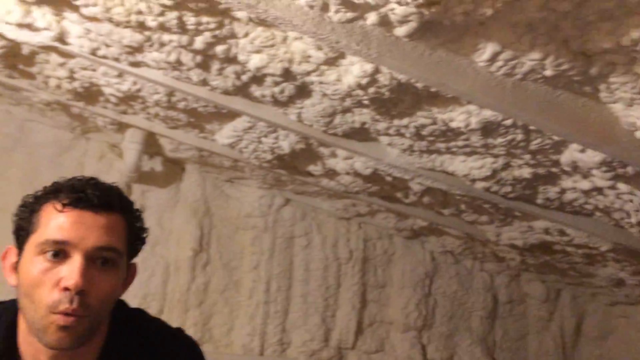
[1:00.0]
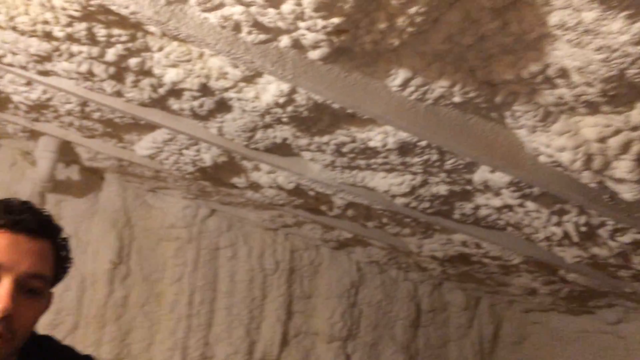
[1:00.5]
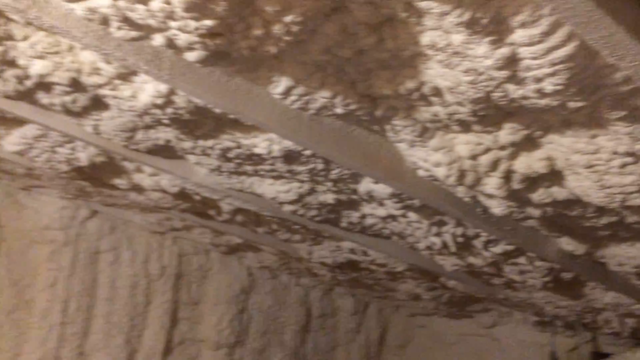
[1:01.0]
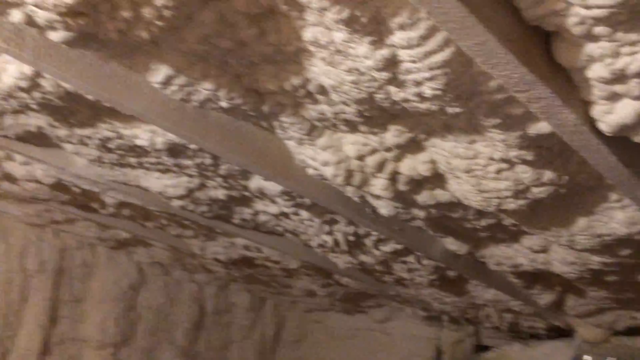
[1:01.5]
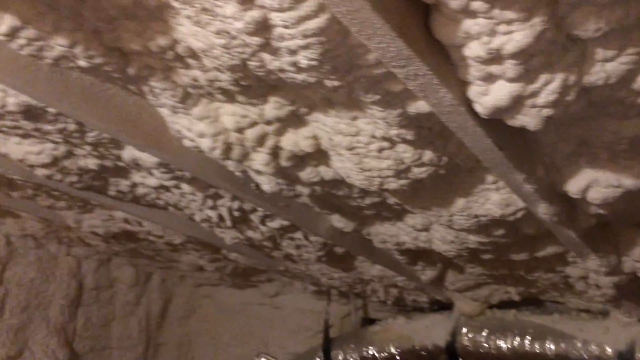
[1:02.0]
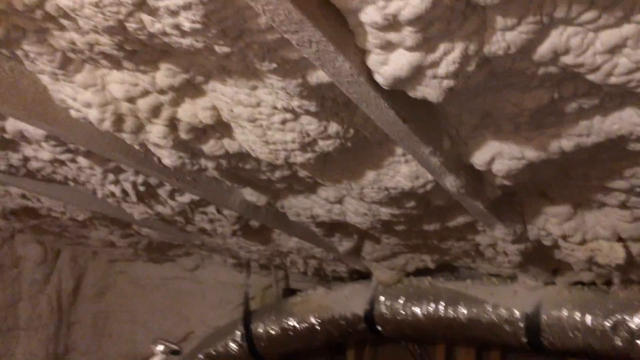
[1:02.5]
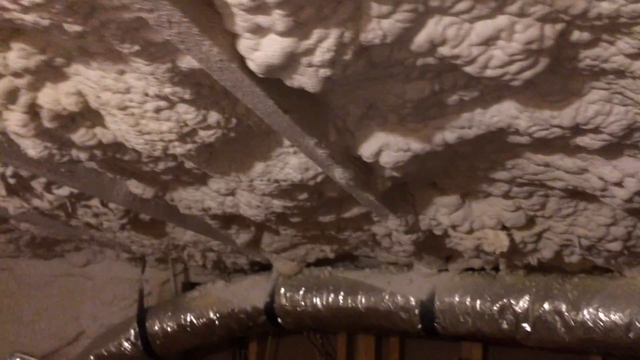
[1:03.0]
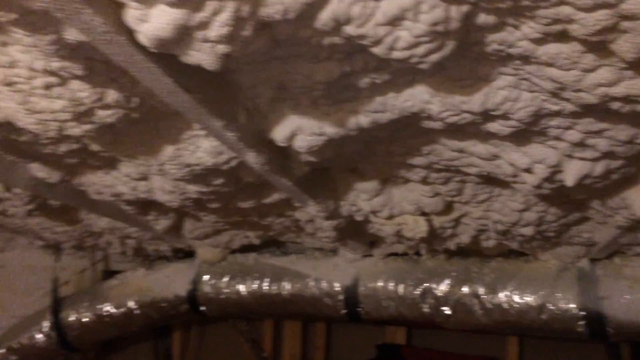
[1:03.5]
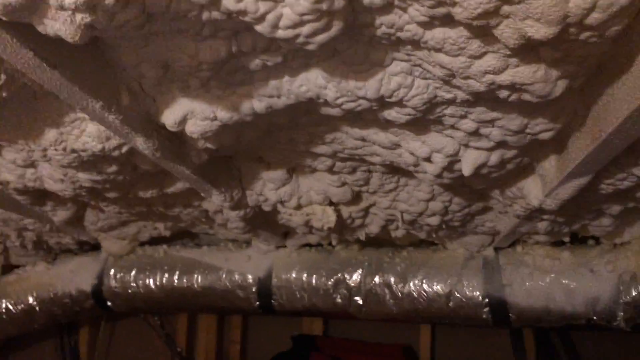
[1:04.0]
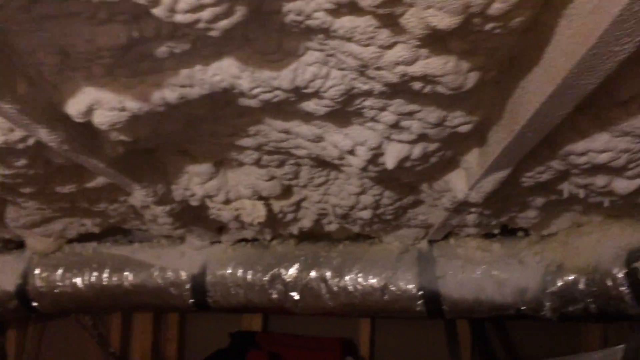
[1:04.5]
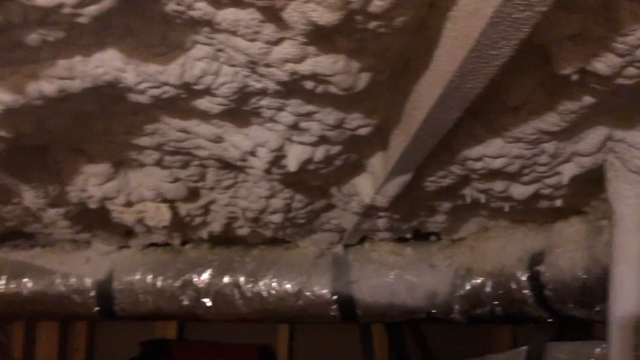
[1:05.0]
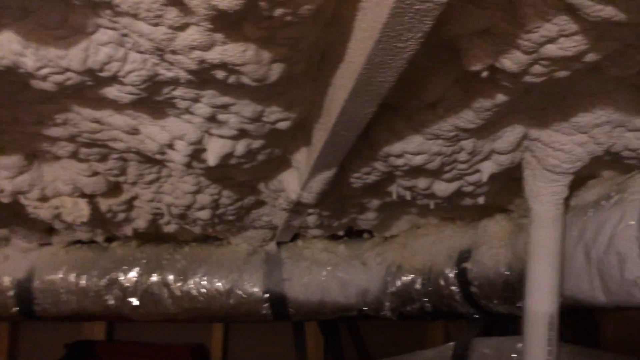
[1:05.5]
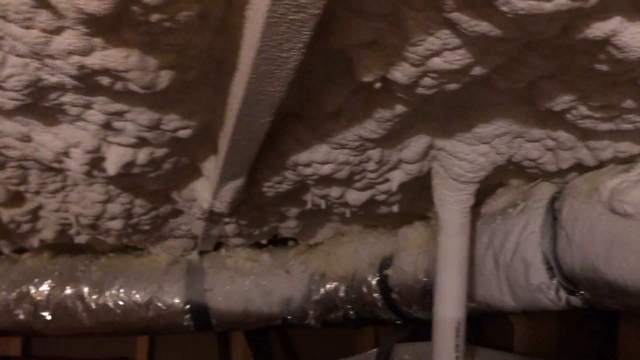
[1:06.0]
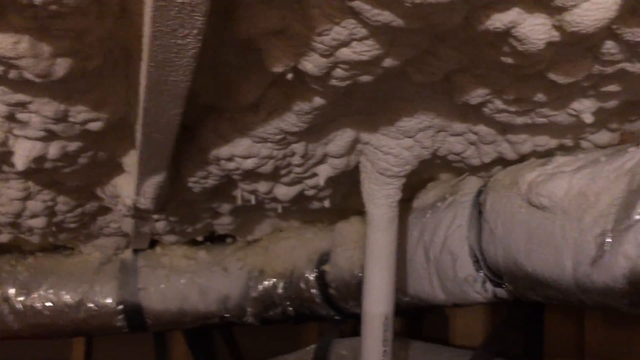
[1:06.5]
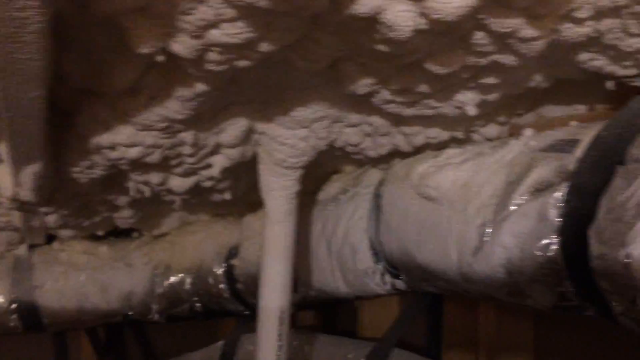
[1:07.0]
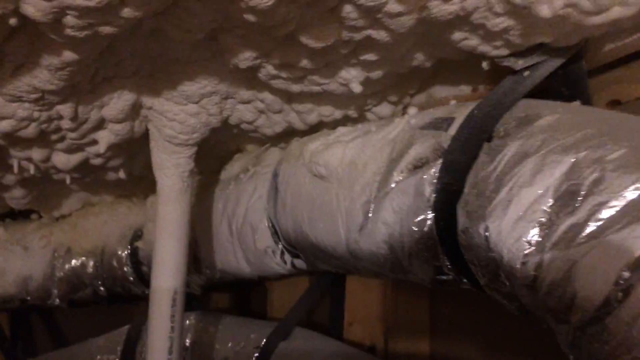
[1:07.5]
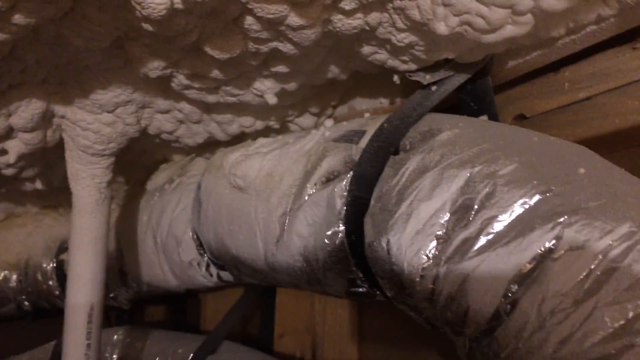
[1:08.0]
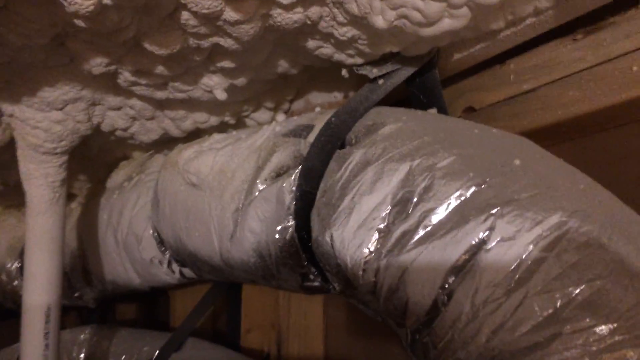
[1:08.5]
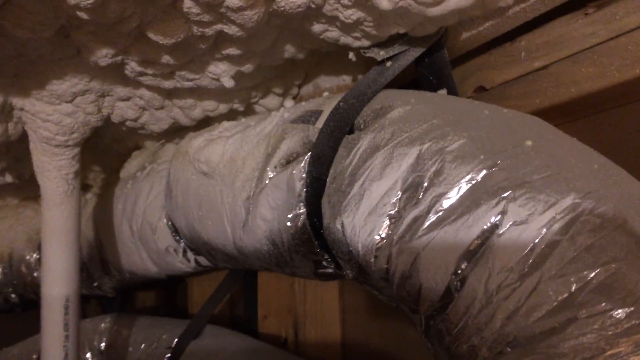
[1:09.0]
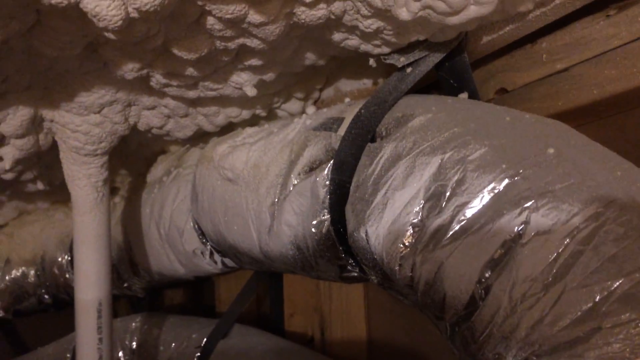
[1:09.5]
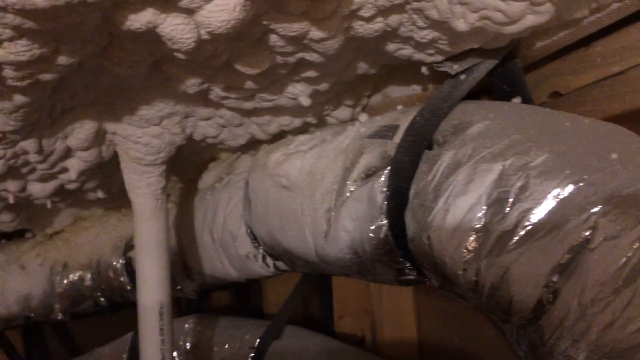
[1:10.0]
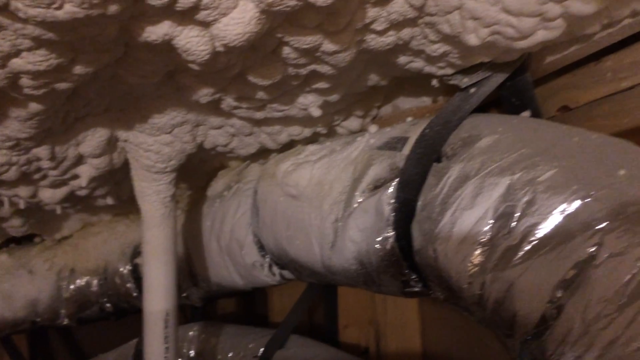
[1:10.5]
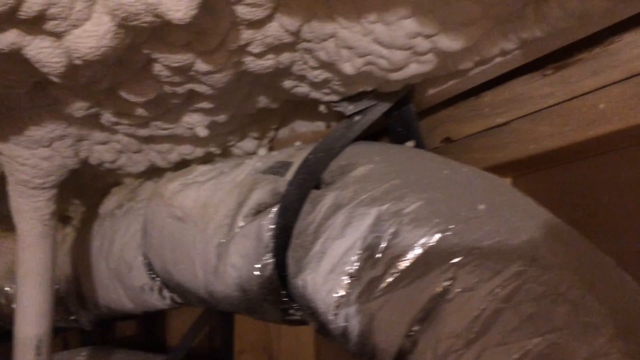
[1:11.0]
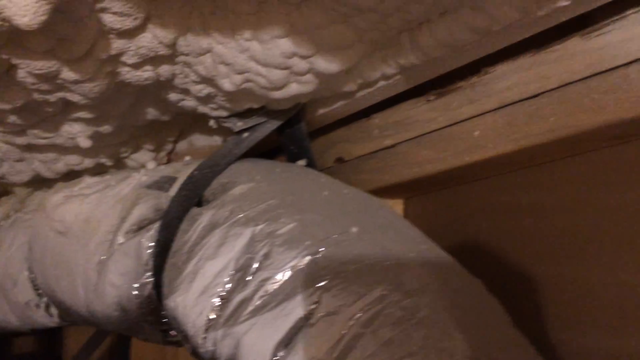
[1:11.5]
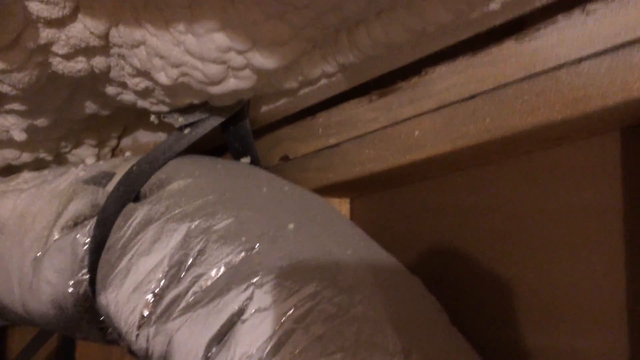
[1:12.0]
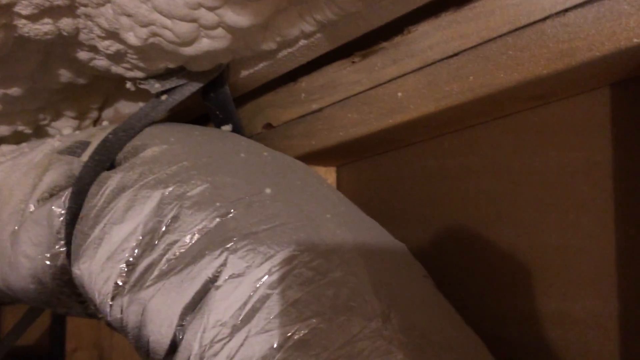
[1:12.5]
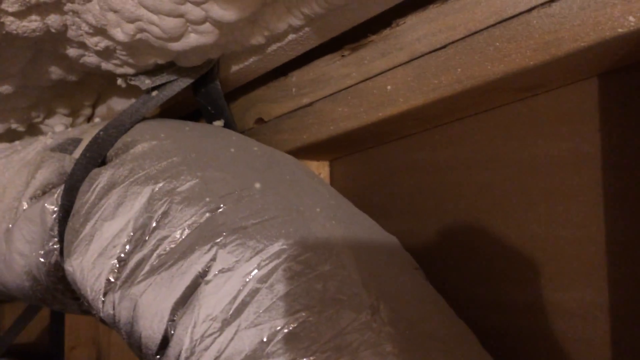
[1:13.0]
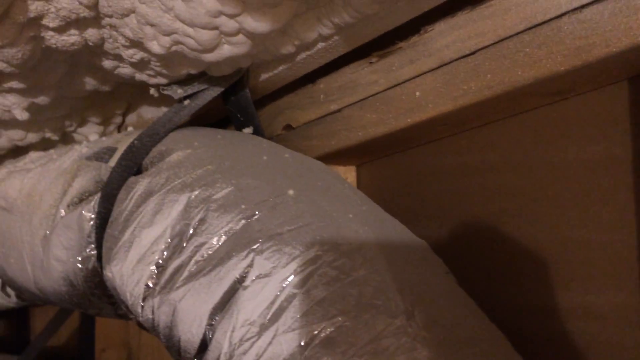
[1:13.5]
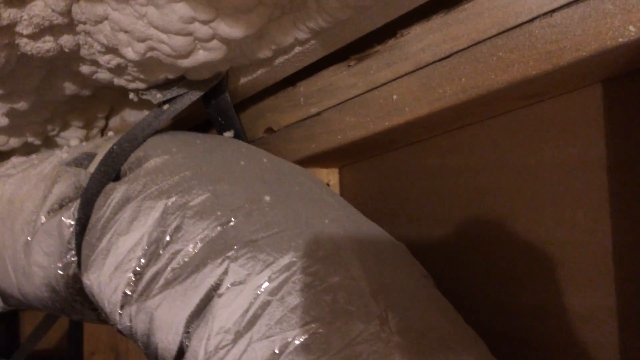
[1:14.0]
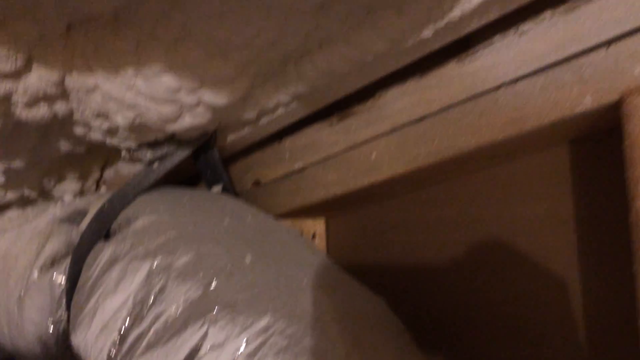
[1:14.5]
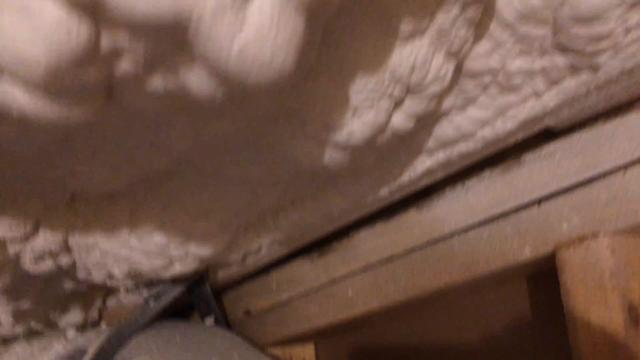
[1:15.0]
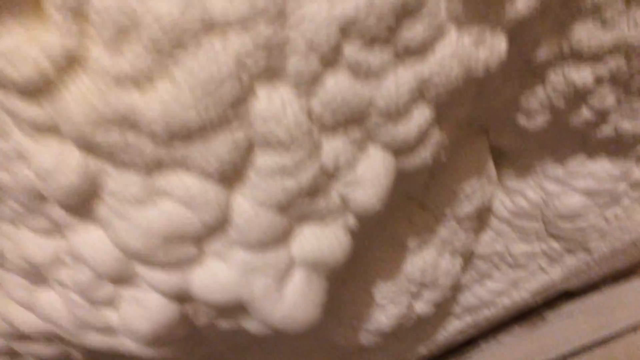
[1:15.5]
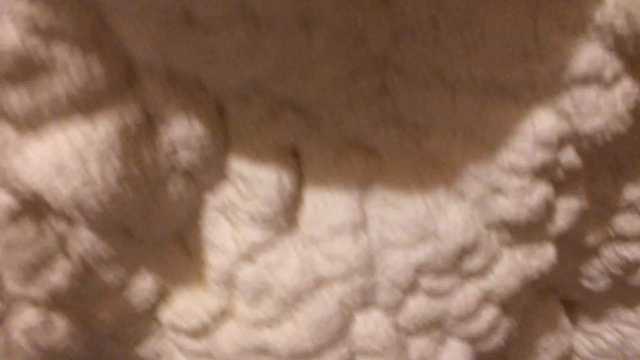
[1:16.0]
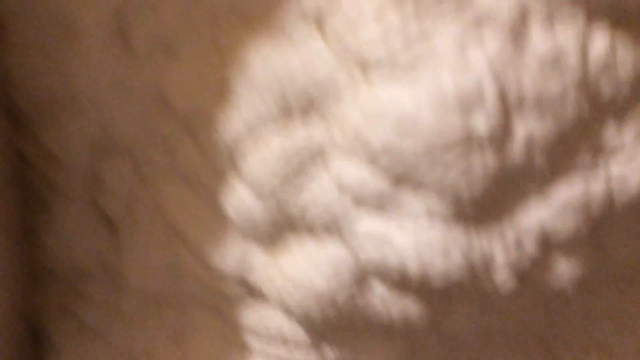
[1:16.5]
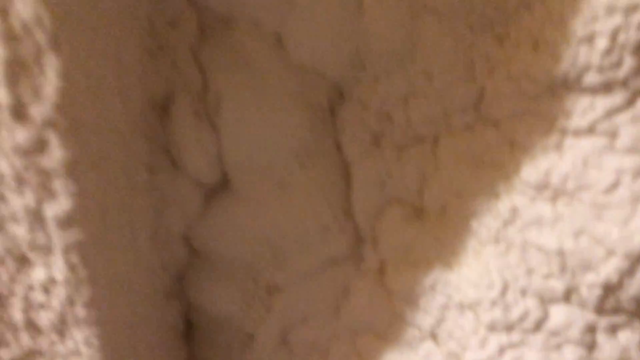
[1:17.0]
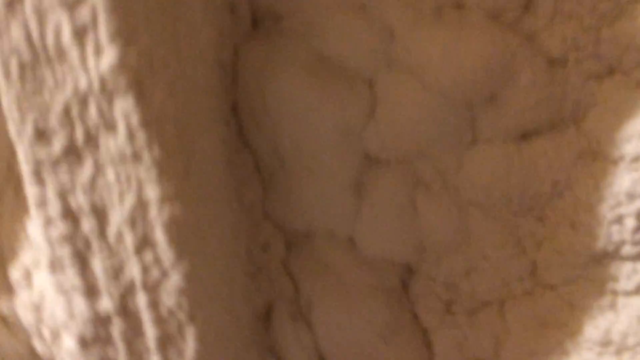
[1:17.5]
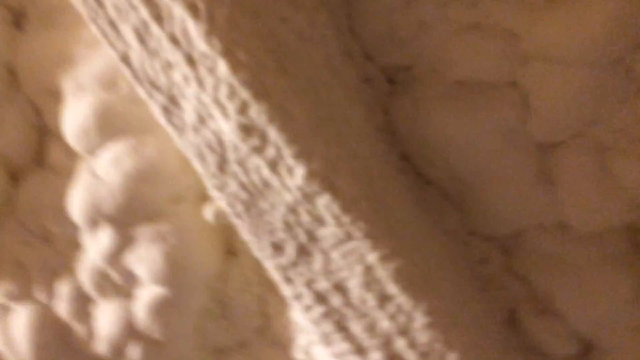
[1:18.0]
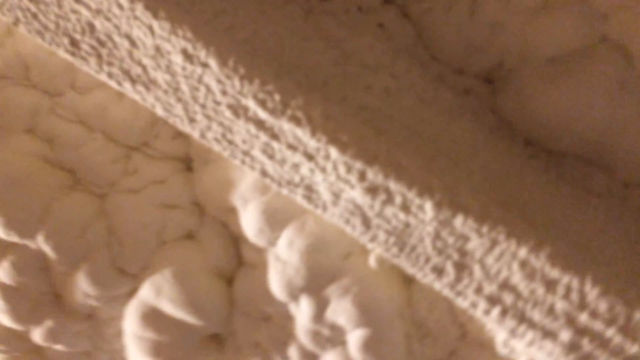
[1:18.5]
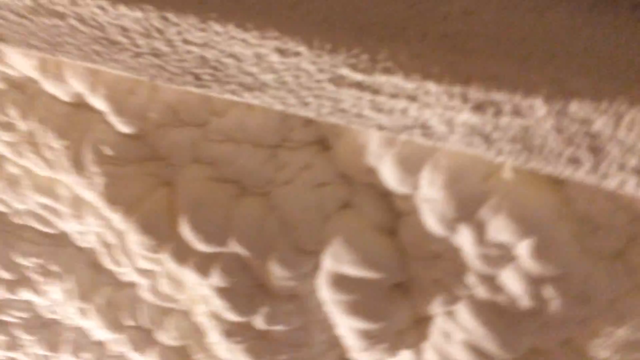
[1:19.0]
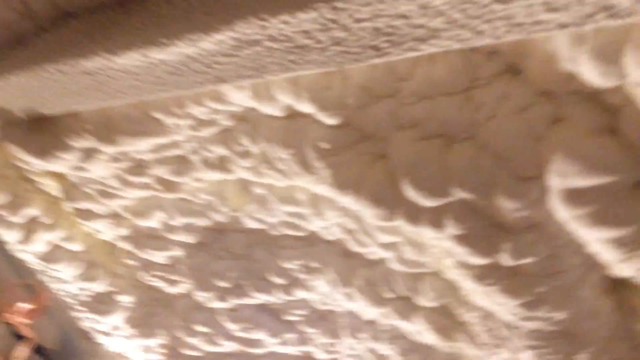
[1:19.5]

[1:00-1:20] The ceiling of the room is not just foam: there seem to be pillars holding on to the foam in the ceiling, apparently holding it together and keeping it intact. The room continues to be shown, and more pipes are visible in the room.